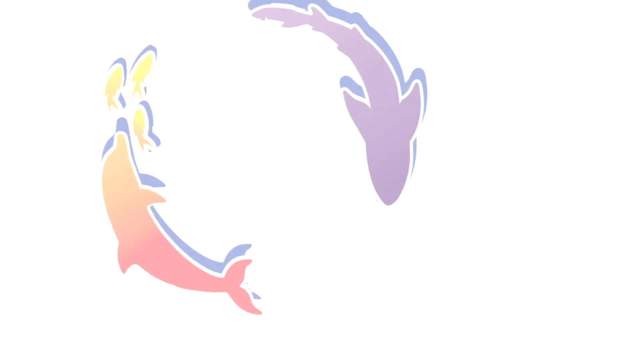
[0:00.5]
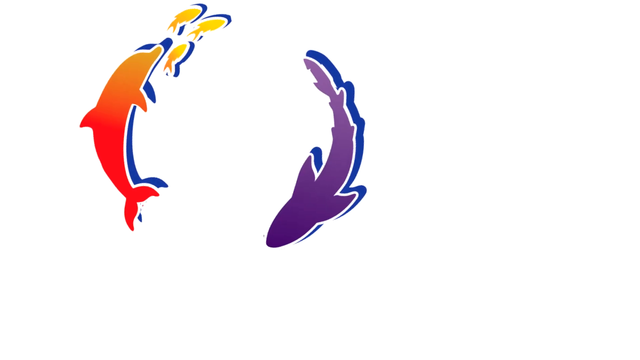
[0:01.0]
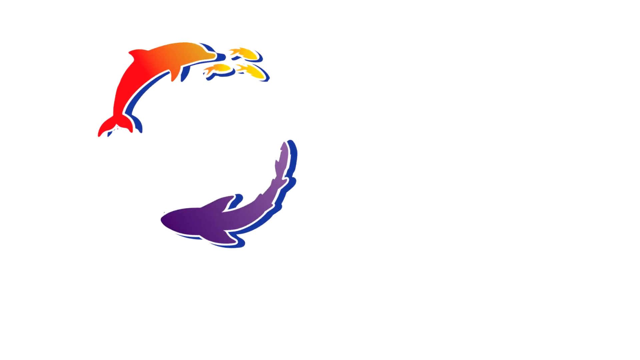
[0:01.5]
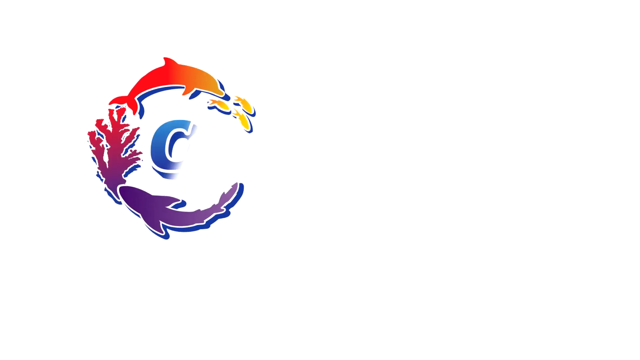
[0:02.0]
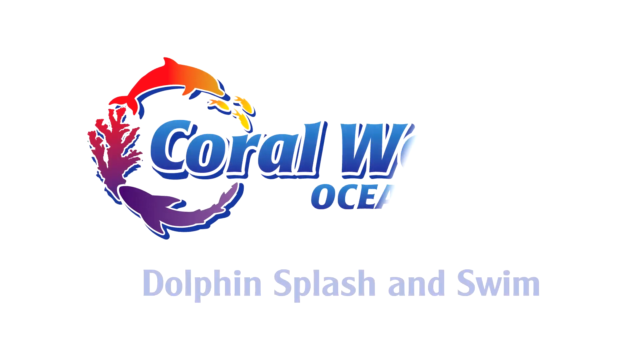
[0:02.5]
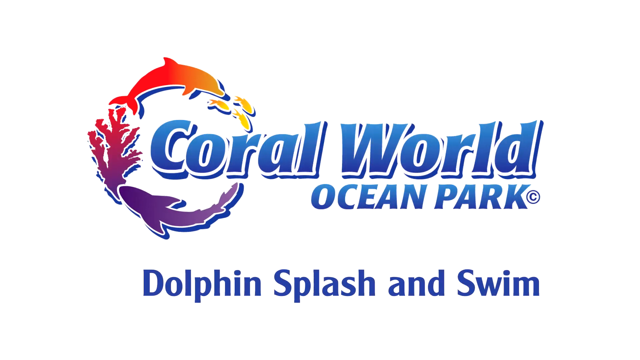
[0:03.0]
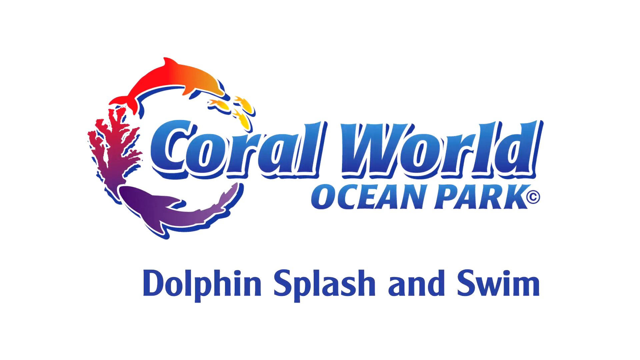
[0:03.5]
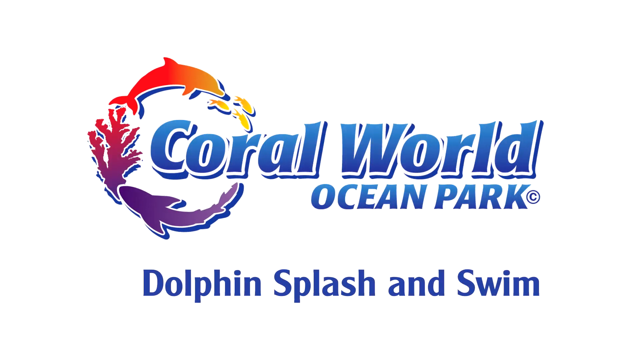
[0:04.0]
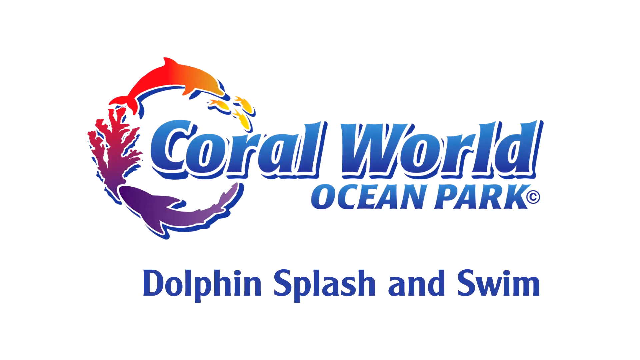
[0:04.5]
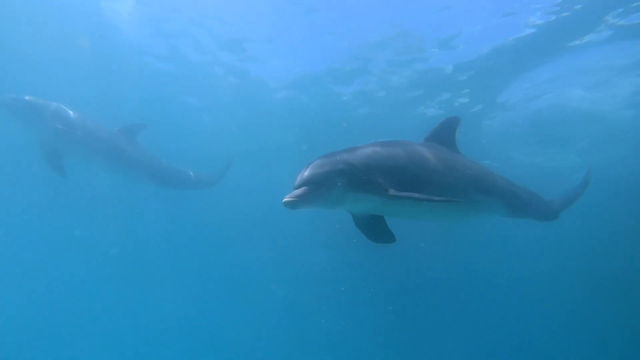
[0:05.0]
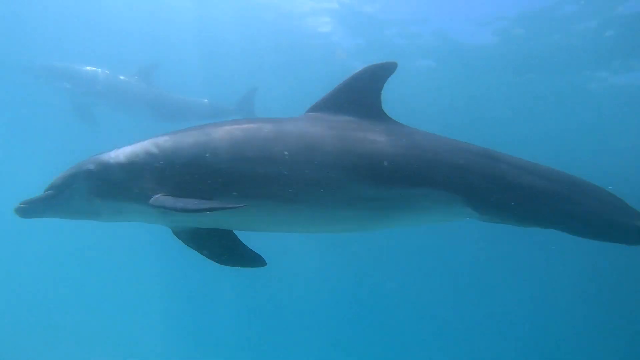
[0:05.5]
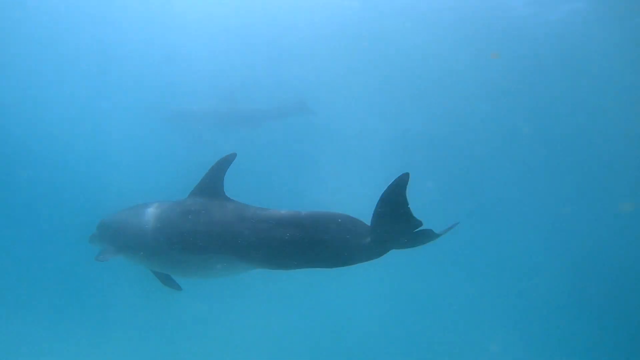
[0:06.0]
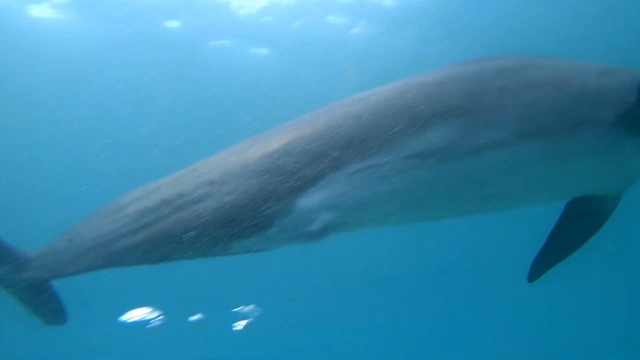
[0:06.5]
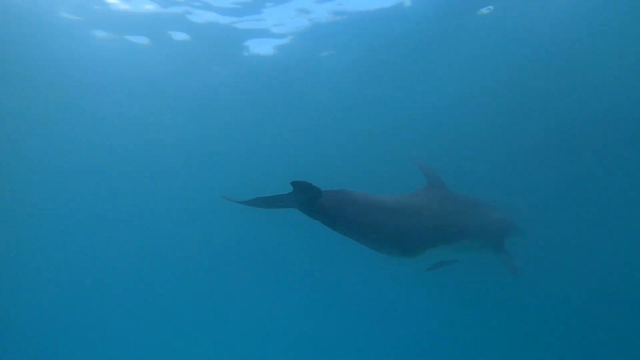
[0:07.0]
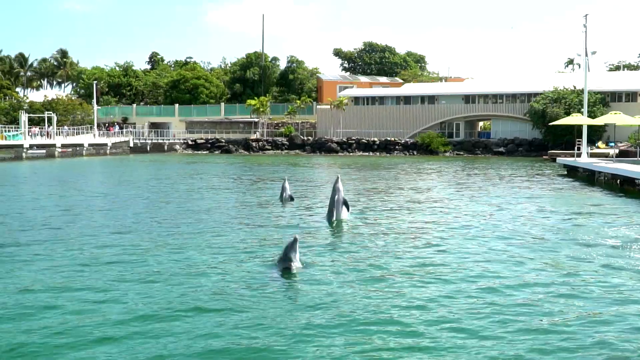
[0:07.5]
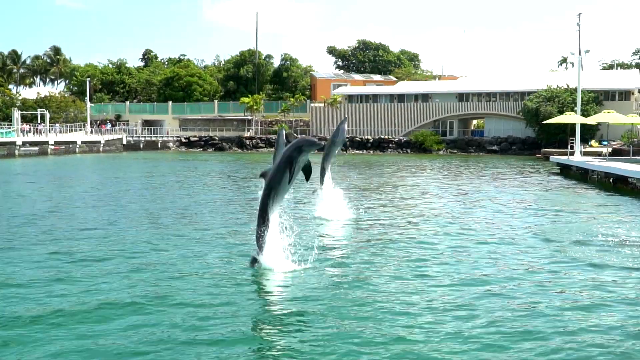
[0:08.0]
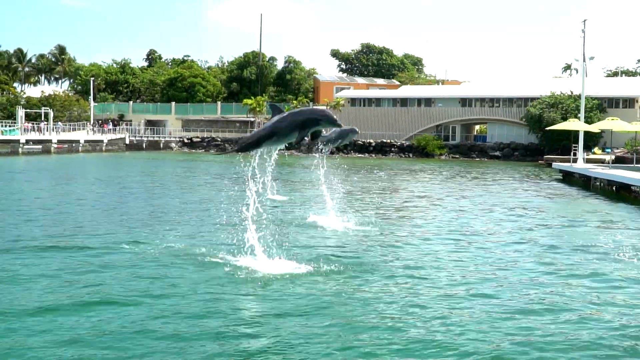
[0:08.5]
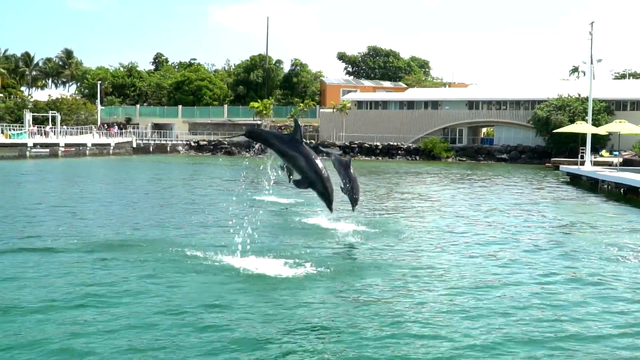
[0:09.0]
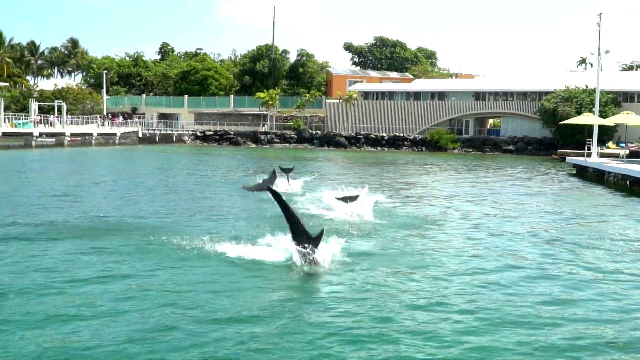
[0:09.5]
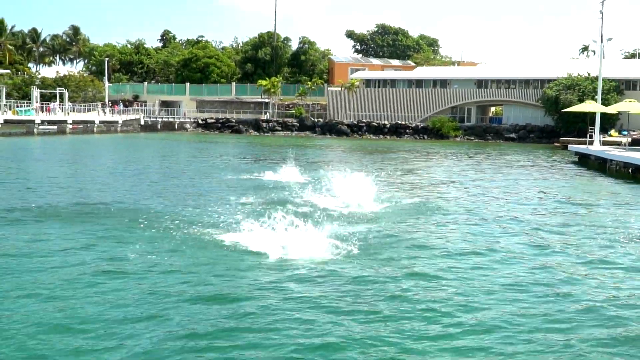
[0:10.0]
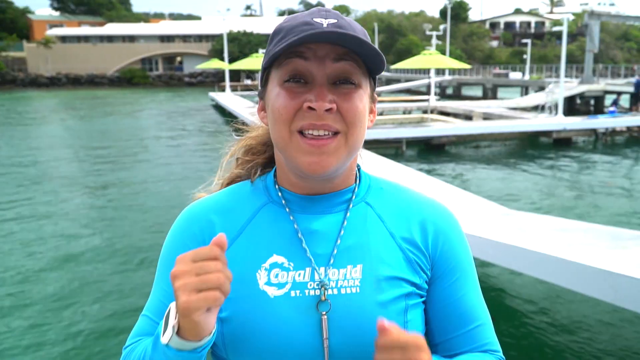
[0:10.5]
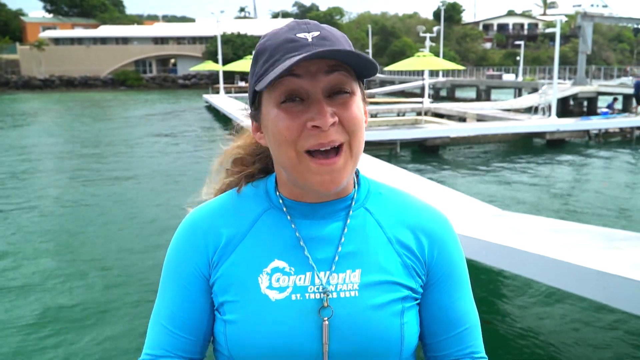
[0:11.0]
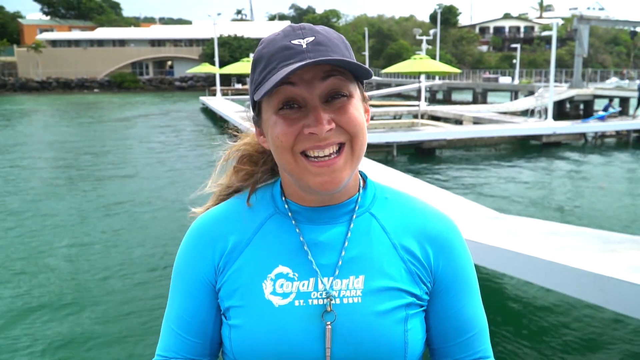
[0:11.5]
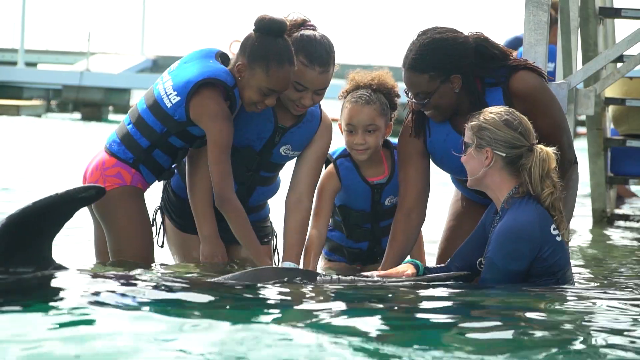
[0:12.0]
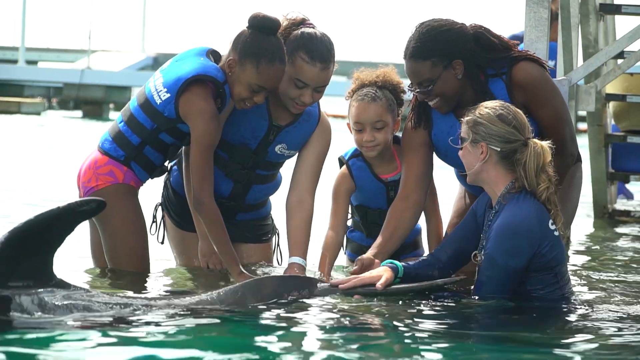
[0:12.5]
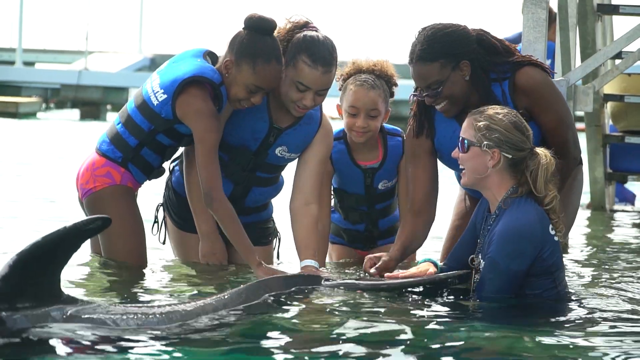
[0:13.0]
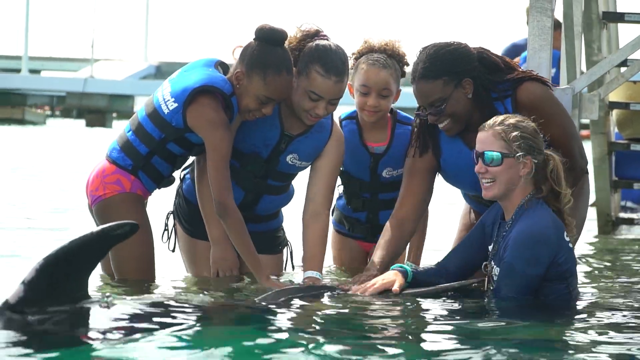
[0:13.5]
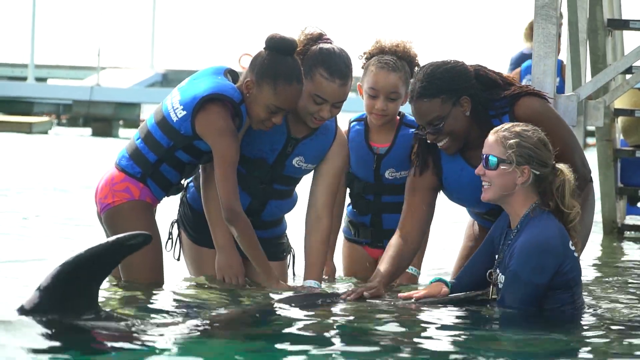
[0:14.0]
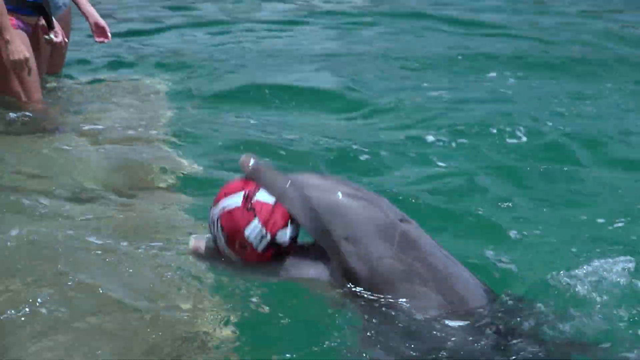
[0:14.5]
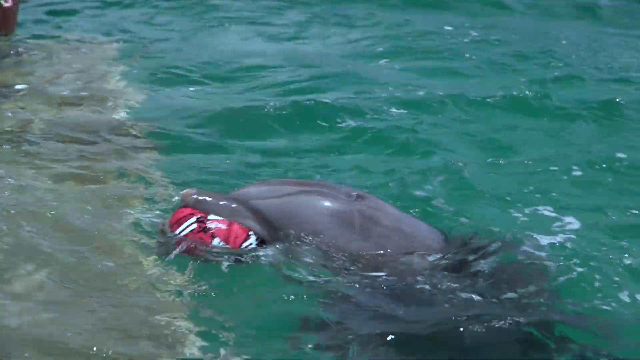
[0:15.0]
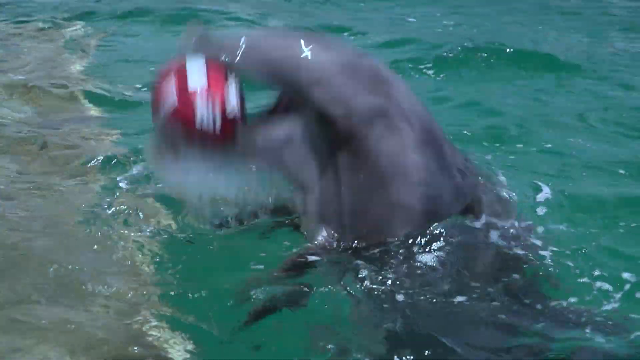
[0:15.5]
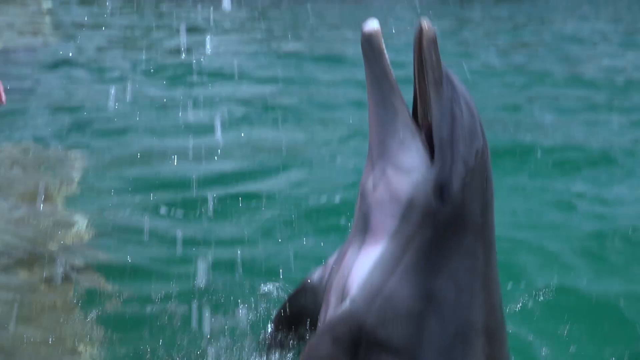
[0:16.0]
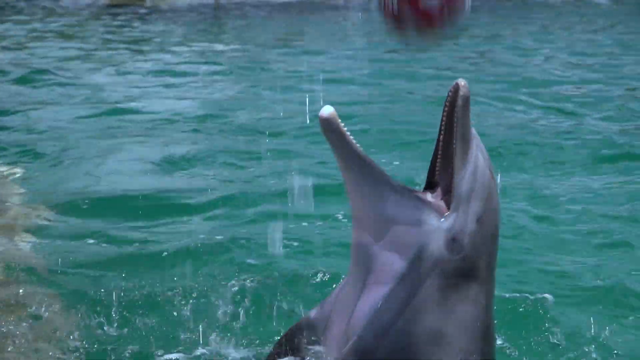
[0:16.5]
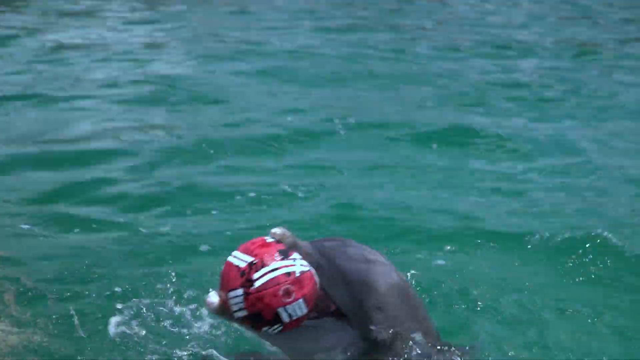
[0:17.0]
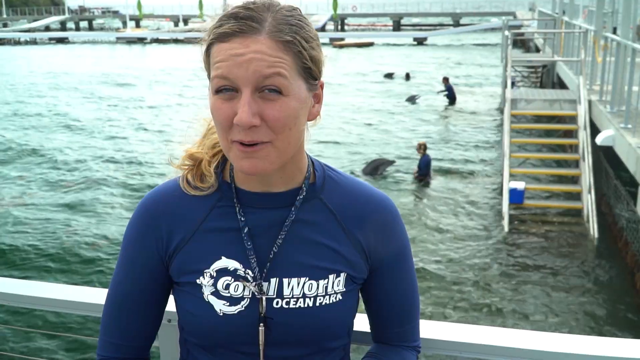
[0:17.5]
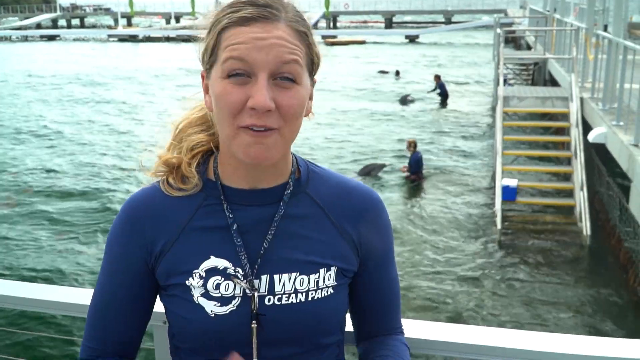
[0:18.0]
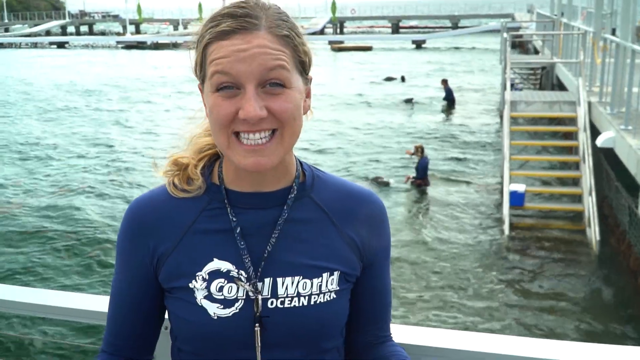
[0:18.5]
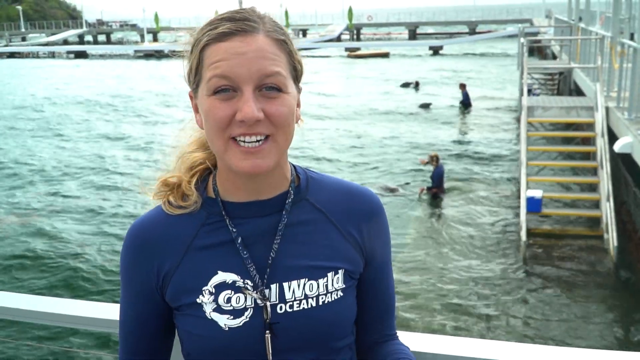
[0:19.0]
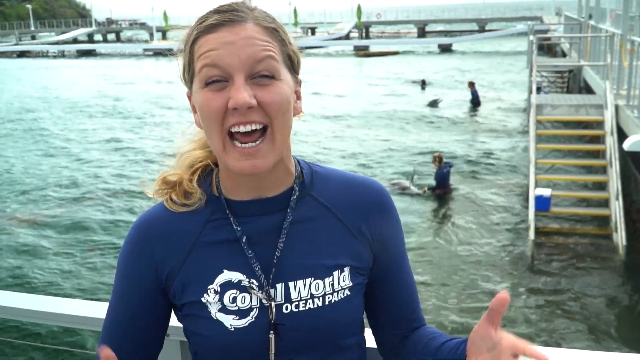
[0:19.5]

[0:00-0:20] The video opens with an animation on a white background: an image of two dolphins and another fish, along with some corals and other fishes, forms a circle. The circle rotates and stops on the screen, becoming part of a logo that reads "Coral World Ocean Park". Underneath is another line of text reading "Dolphin Splash and Swim". Right after, an underwater shot shows bright blue water all around and two dolphins swimming through it very fast. Next comes a shot of the park, with the water, some buildings in the background, and three dolphins jumping out of the water and going back in with a splash. A headshot follows of a lady speaking to the camera with the water behind her. Then a group of people, three young girls and two adults, one of them the instructor, are all petting a dolphin in the water. In the next shot, a dolphin's head comes out of the water; with its mouth open, it catches a ball thrown at it, throws it in the air and catches it again. Another headshot then shows one of the instructors talking to the camera.